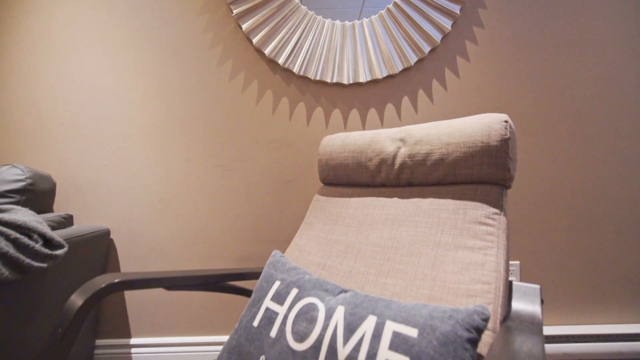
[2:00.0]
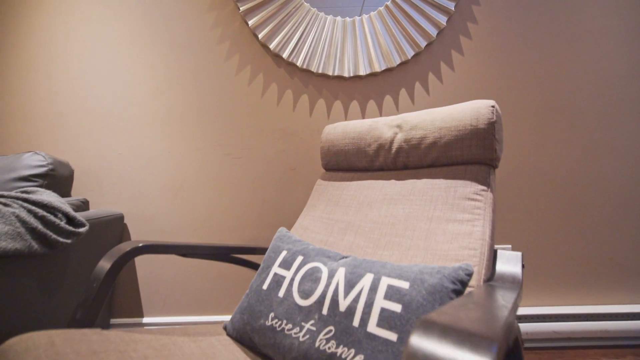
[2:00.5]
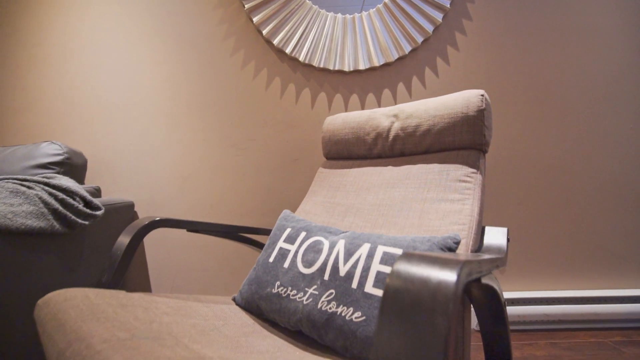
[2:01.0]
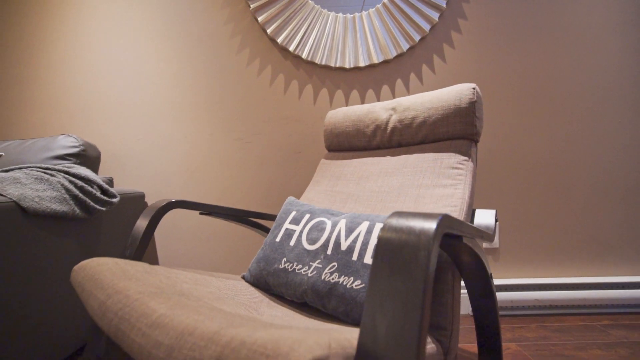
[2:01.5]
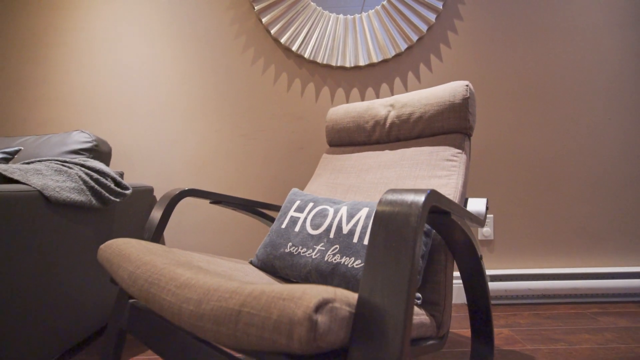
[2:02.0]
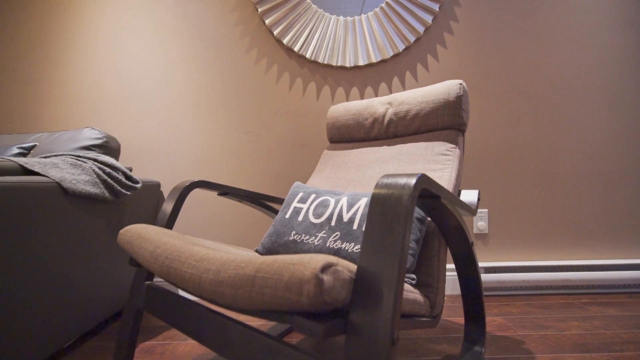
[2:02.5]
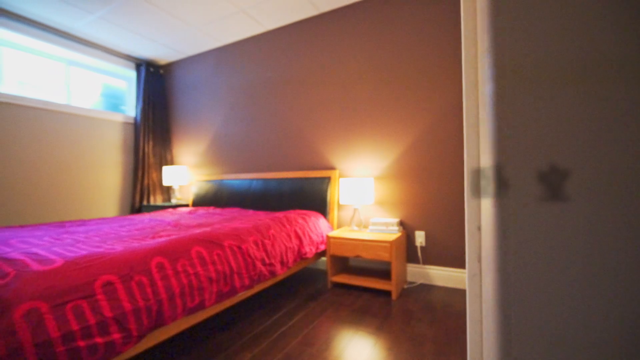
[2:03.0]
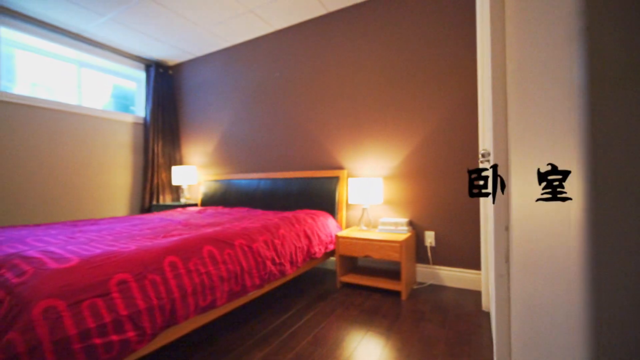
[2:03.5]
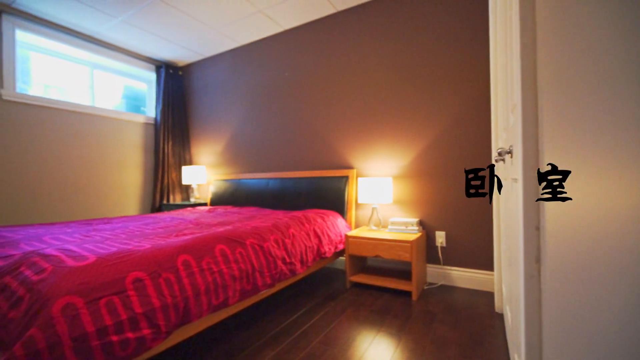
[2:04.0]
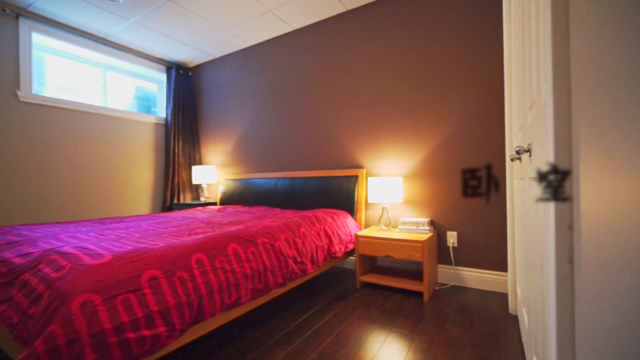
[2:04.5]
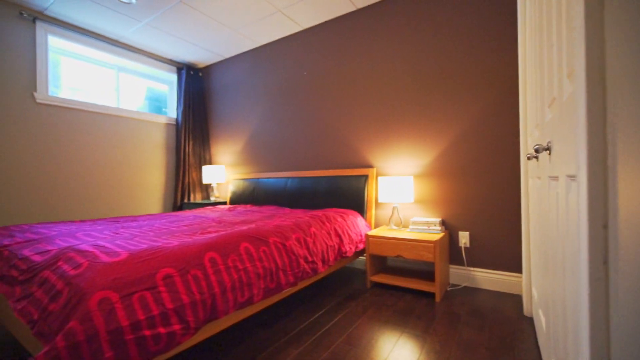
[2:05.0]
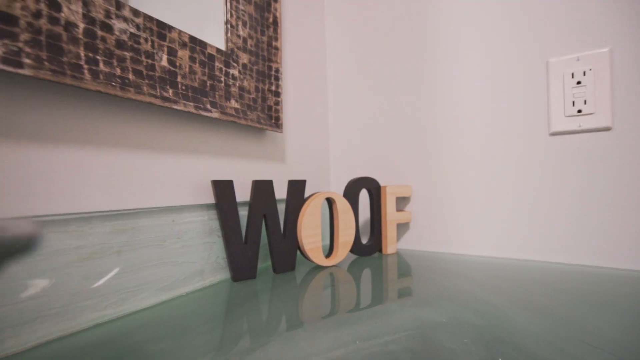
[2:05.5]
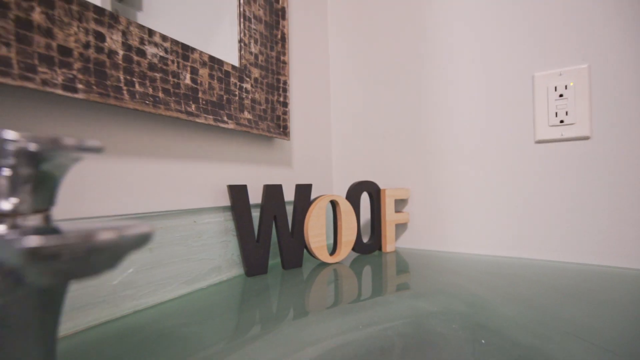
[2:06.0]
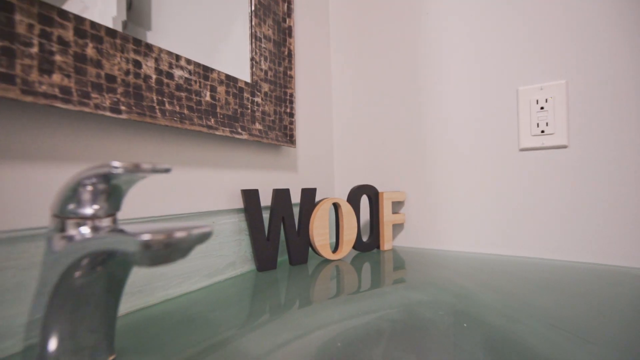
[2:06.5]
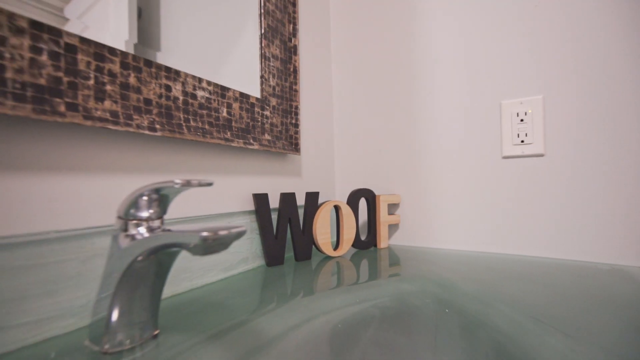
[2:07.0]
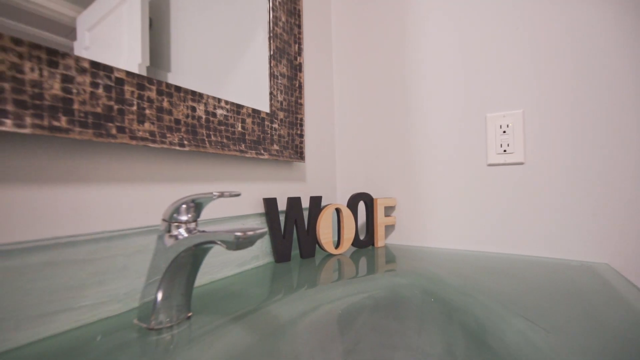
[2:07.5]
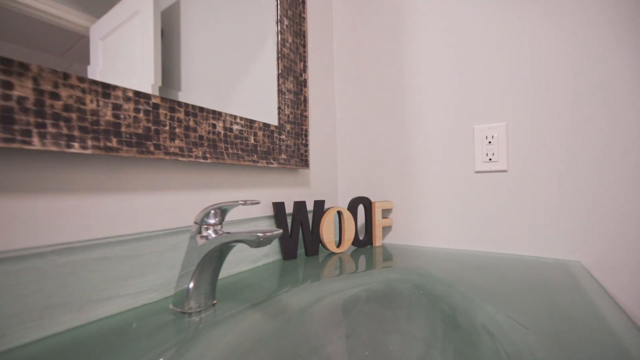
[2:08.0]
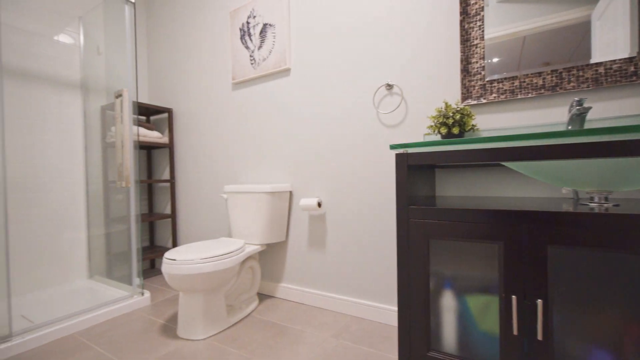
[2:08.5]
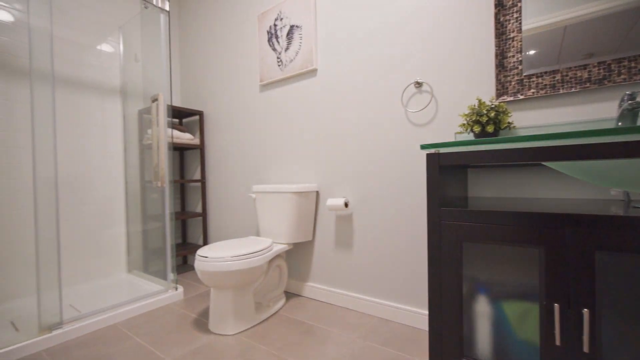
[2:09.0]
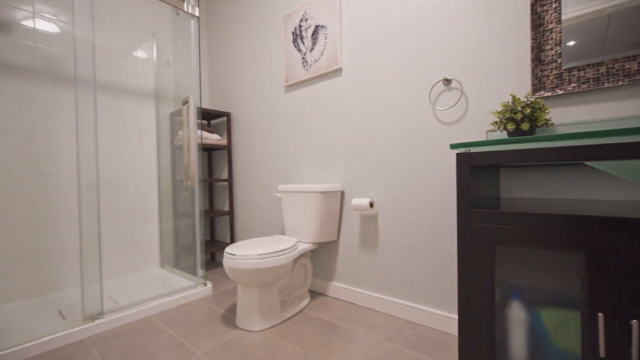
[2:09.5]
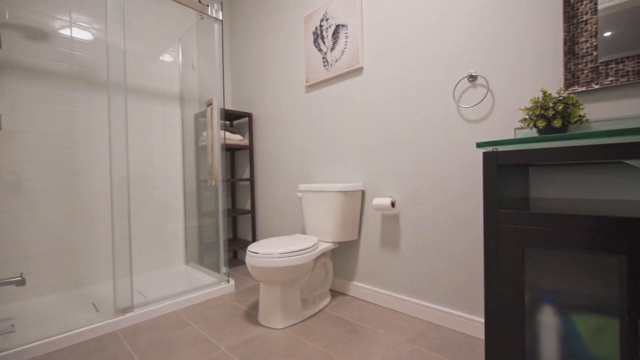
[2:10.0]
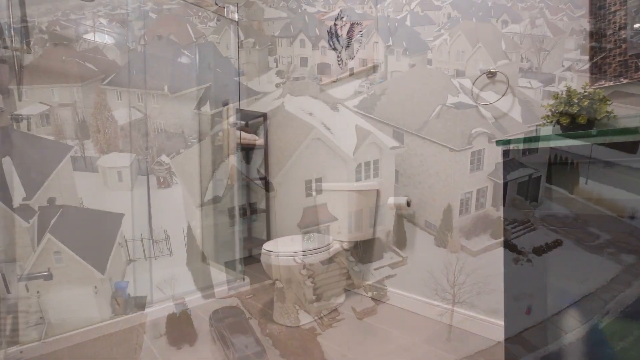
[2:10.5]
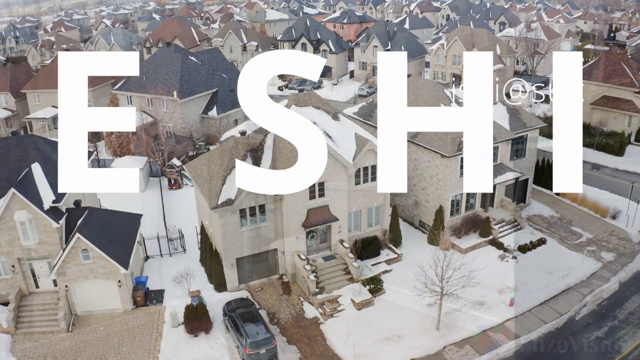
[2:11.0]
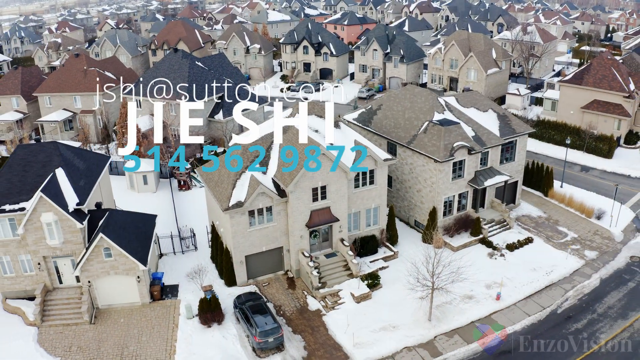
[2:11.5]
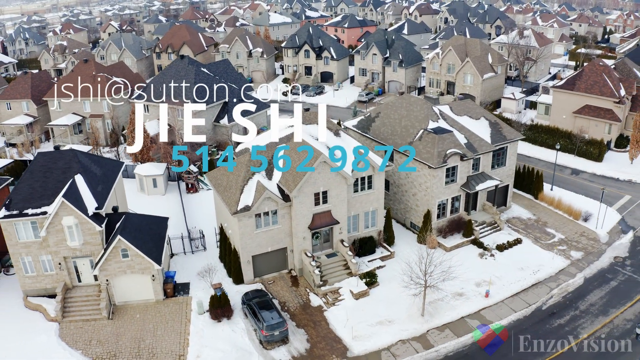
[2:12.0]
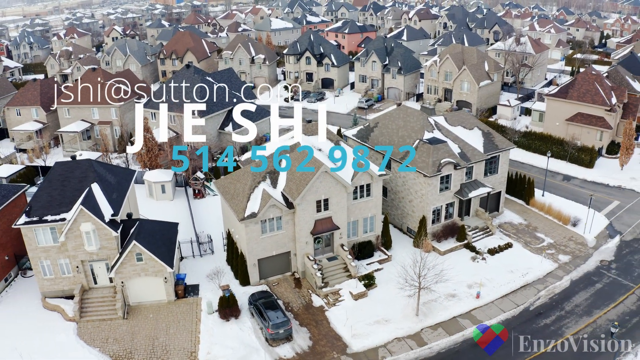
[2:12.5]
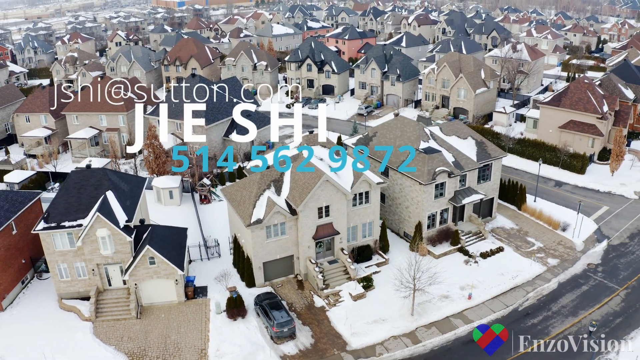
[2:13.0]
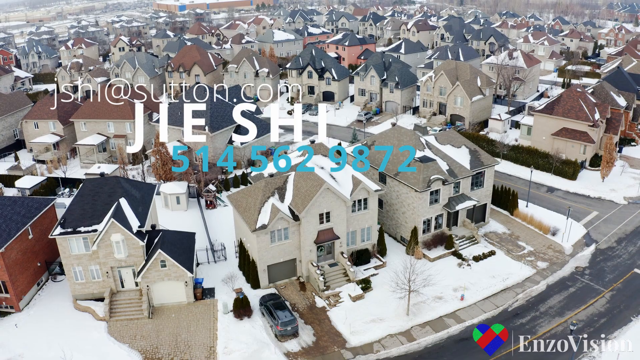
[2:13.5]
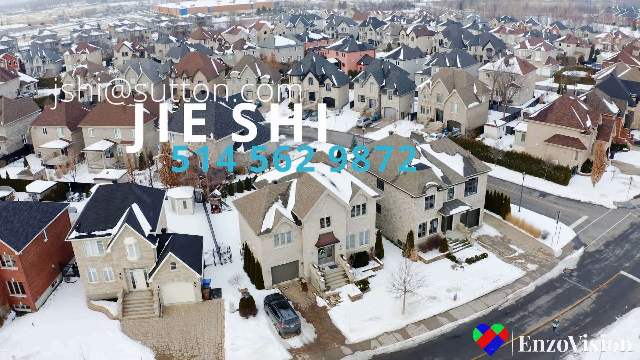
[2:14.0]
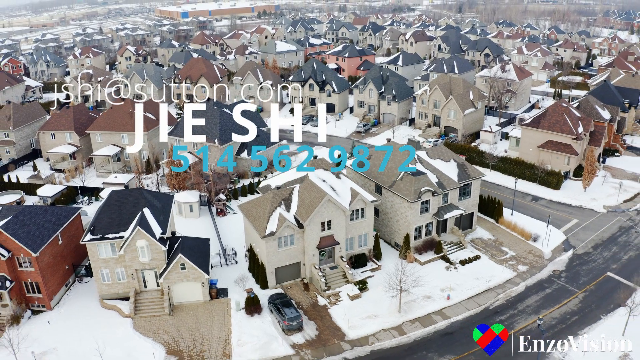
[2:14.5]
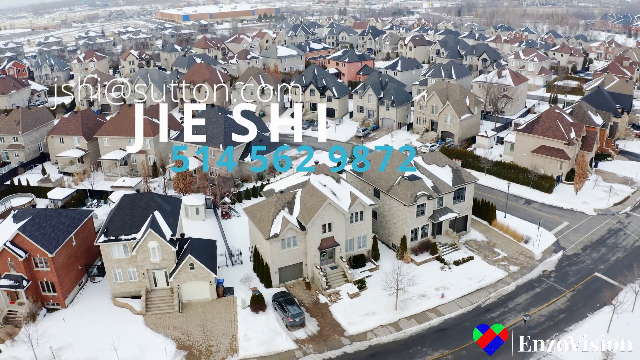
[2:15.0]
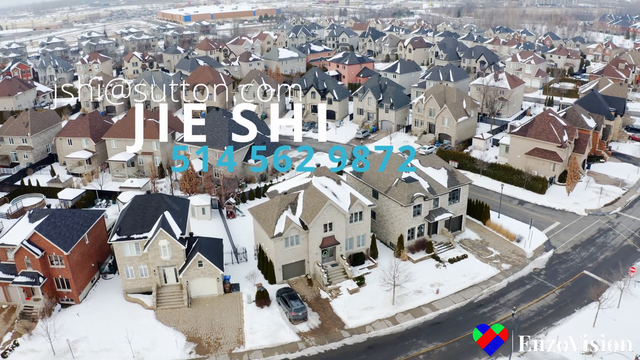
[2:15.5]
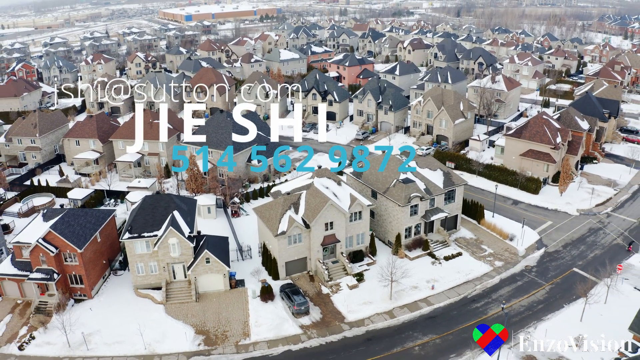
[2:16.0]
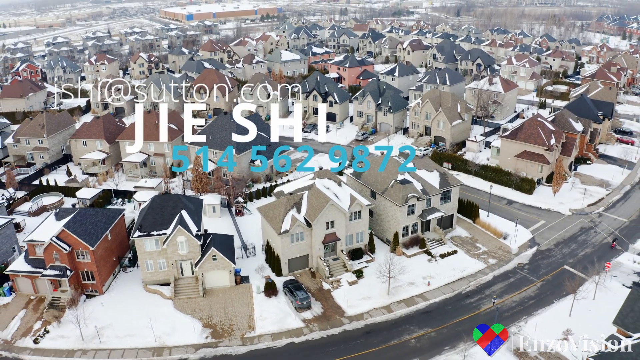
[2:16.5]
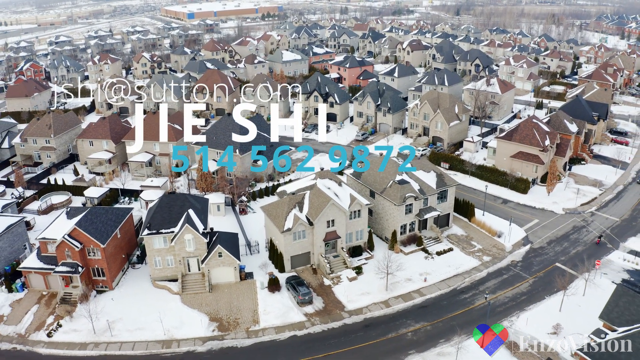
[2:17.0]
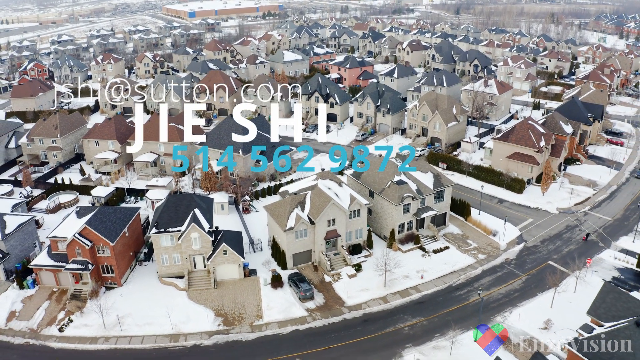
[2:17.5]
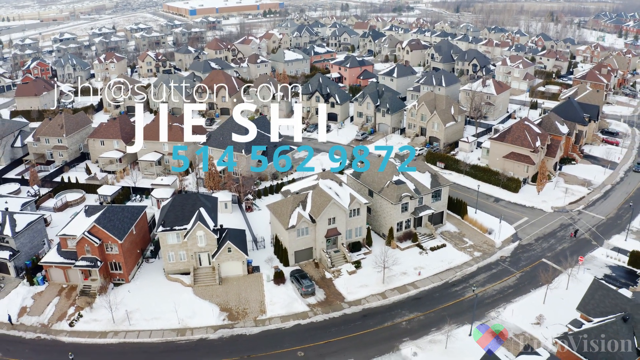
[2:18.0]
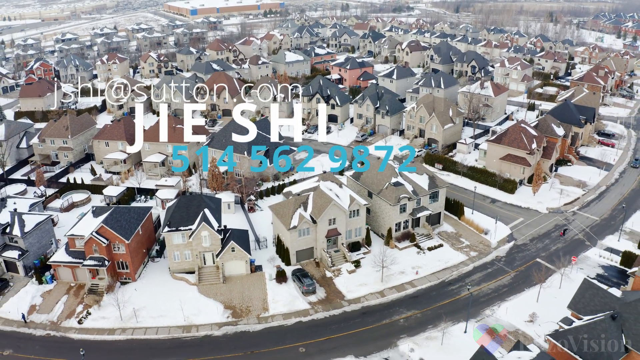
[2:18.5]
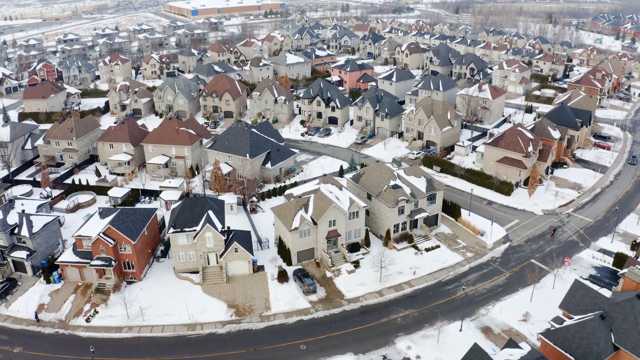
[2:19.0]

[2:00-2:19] Another bedroom is shown, with a pink comforter on the bed, dark flooring, a back wall that appears brownish-purplish, and a small window on the left. Next is a bathroom, with some house decor in the corner that says "WOOF". The countertop appears to be green. The faucet is shown, then the vanity above the faucet, then the toilet. The camera slowly rotates to the left, showing the glass shower. The outro shows the neighborhood in drone footage style as some info appears, including "Sutton.com" with a name spelled J-I-A-J-I-E-S-H-I, and a phone number in blue, "514-562-9872". The drone moves upward and the video ends.